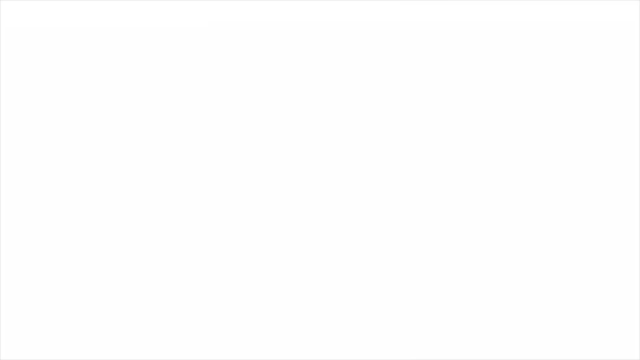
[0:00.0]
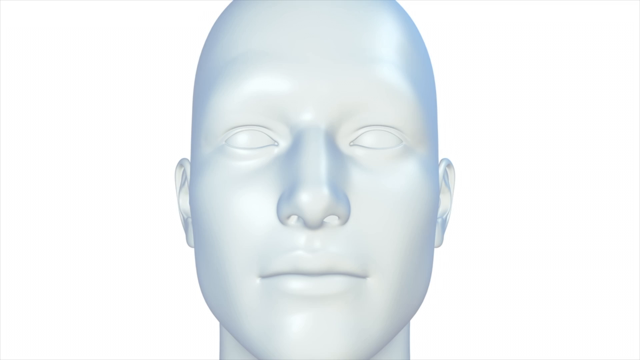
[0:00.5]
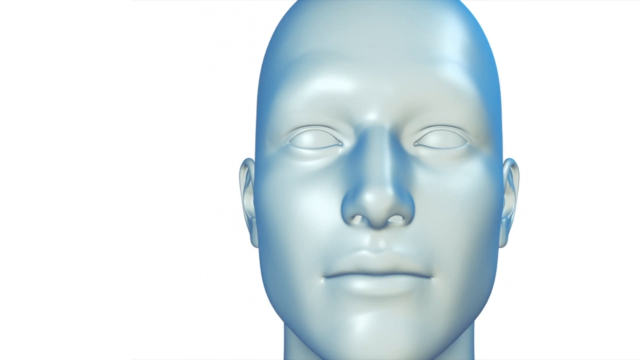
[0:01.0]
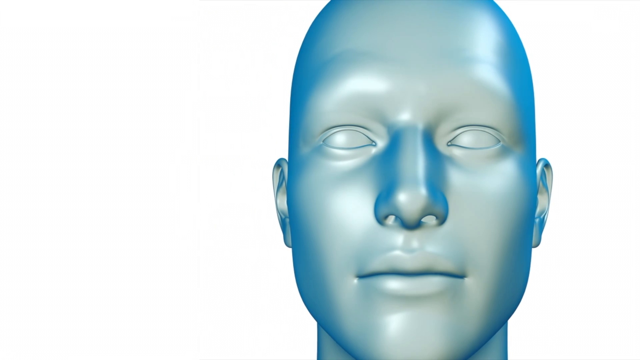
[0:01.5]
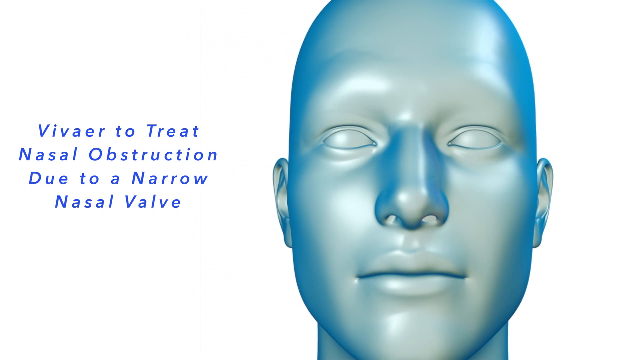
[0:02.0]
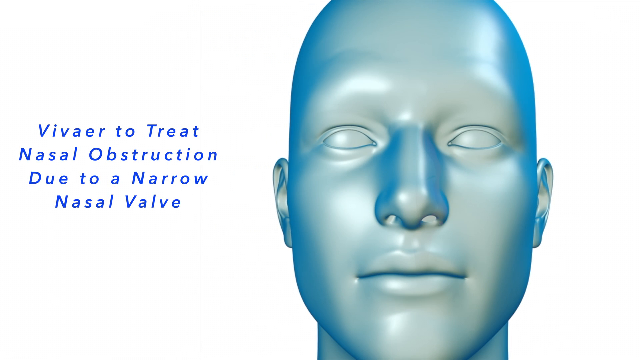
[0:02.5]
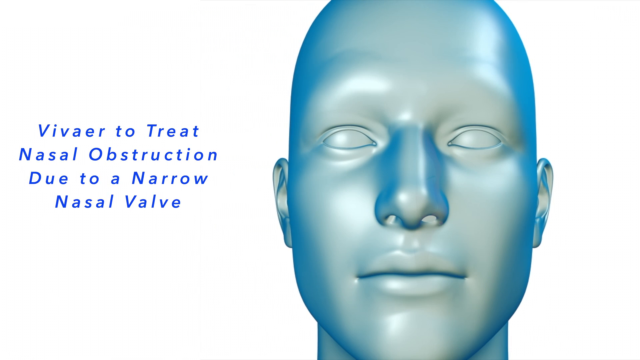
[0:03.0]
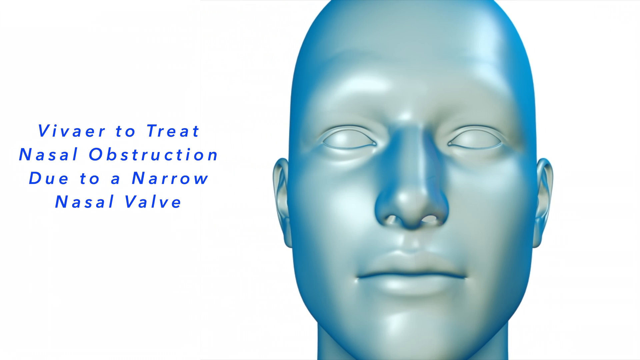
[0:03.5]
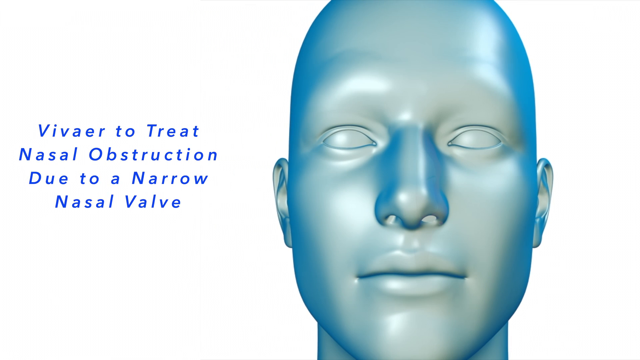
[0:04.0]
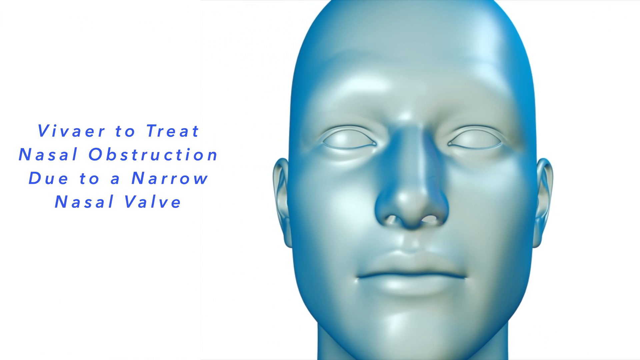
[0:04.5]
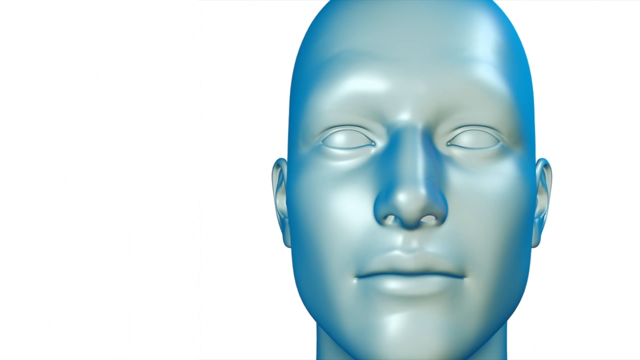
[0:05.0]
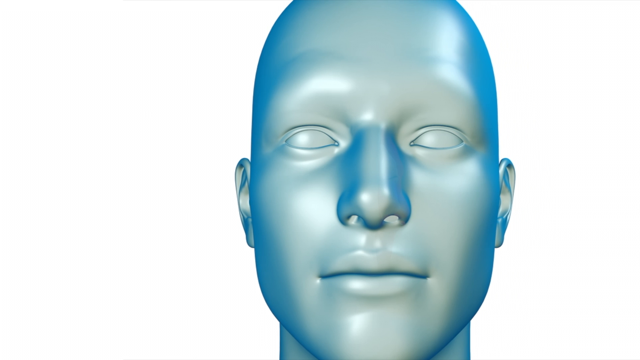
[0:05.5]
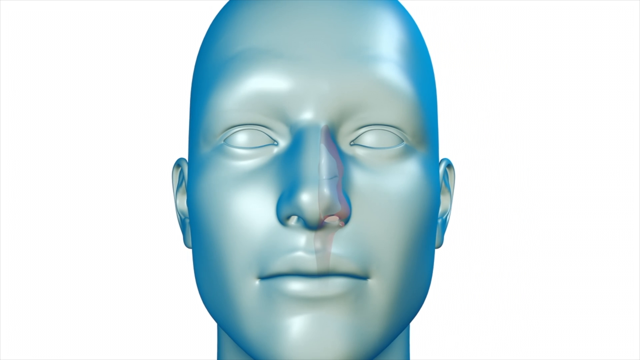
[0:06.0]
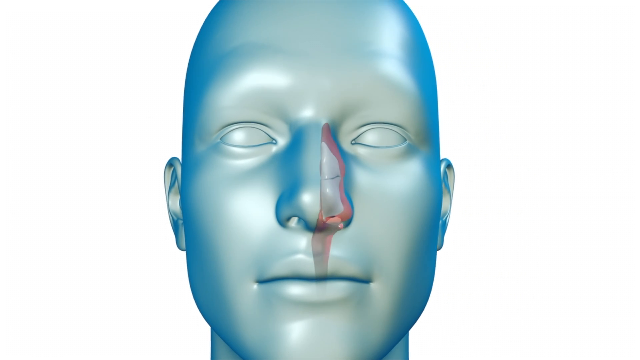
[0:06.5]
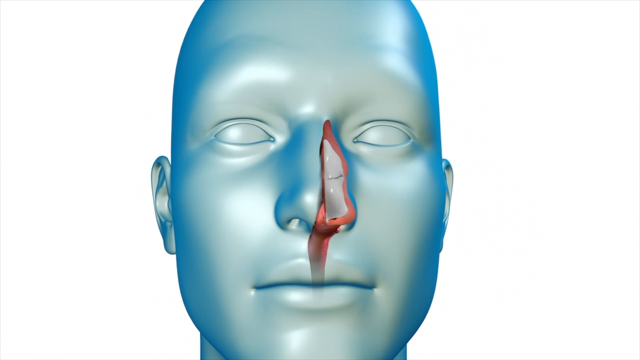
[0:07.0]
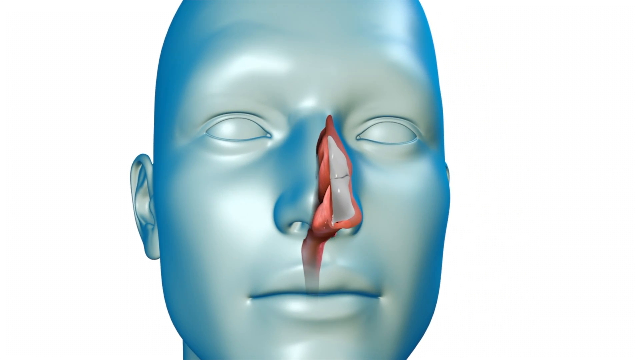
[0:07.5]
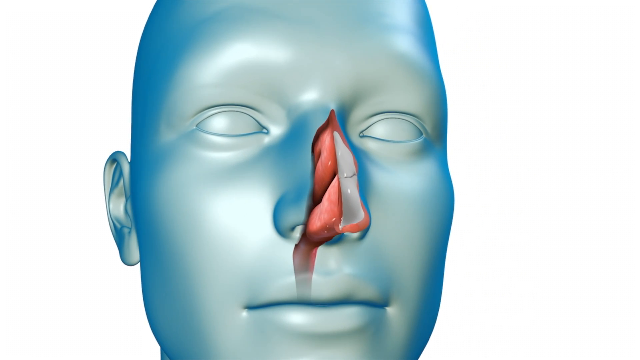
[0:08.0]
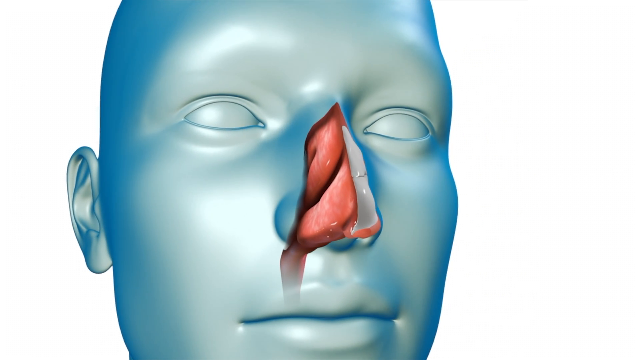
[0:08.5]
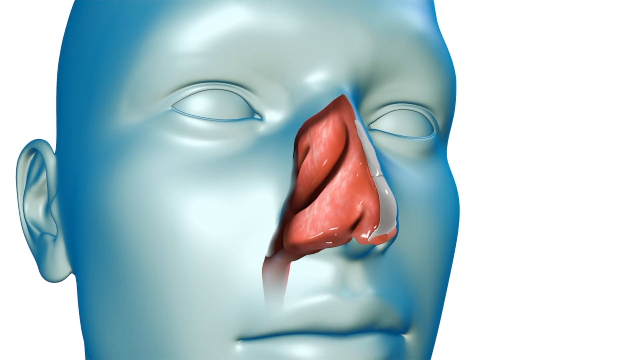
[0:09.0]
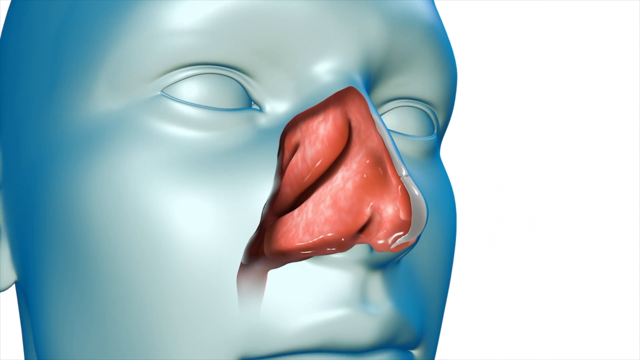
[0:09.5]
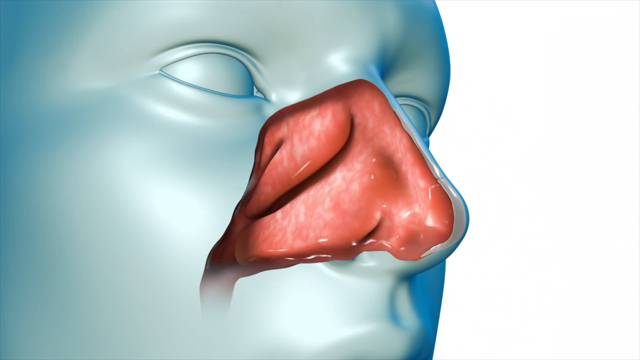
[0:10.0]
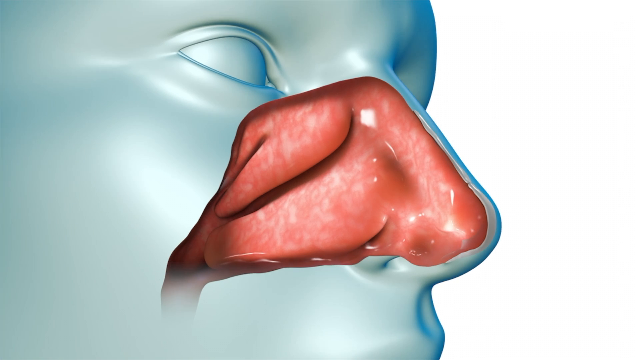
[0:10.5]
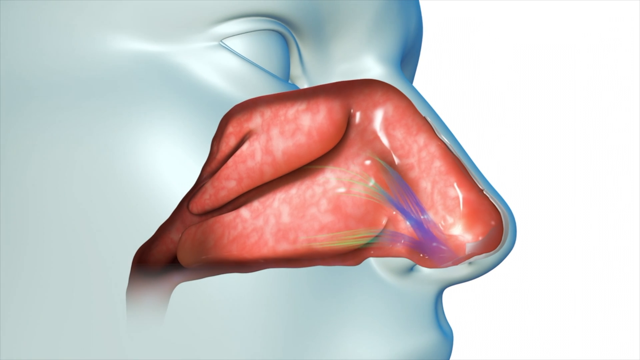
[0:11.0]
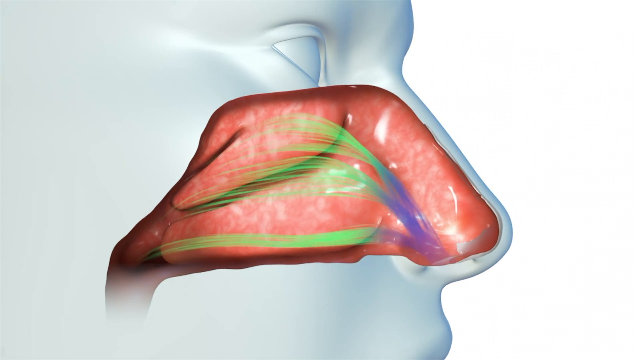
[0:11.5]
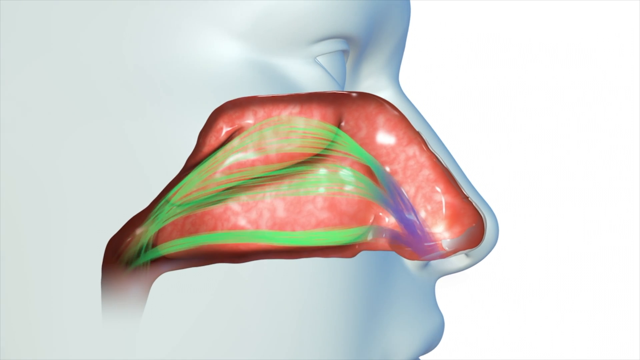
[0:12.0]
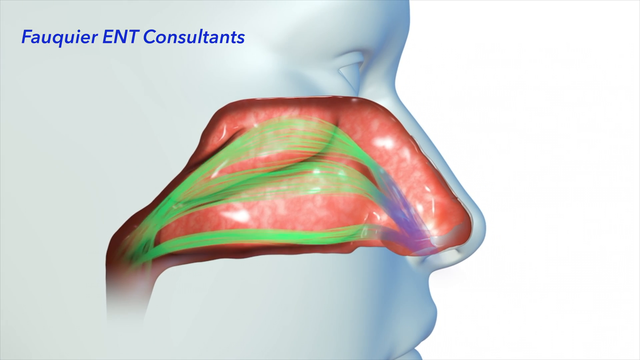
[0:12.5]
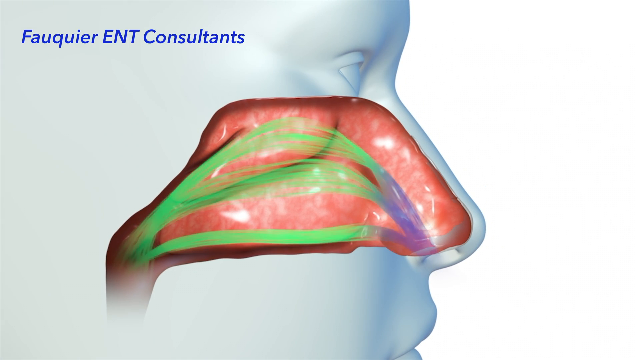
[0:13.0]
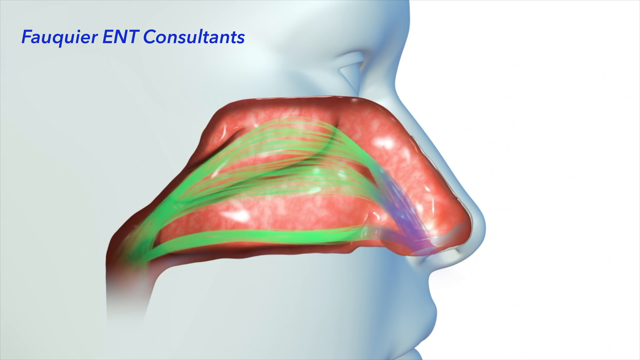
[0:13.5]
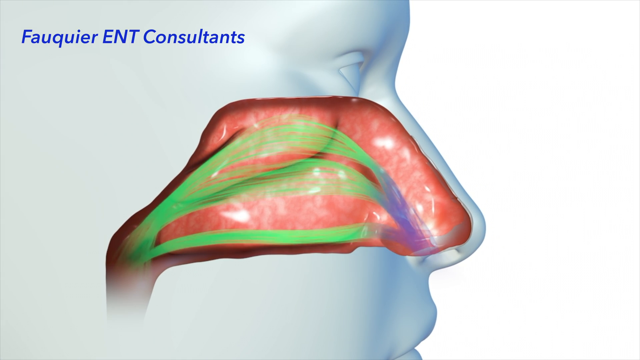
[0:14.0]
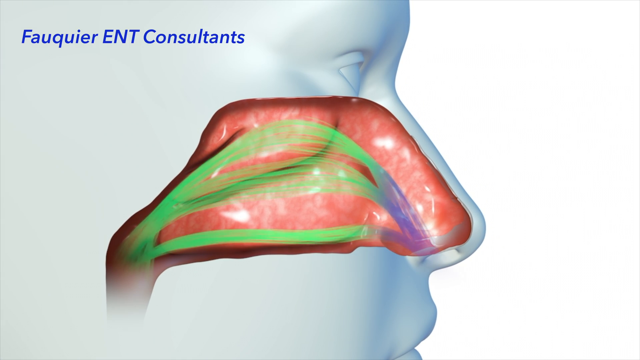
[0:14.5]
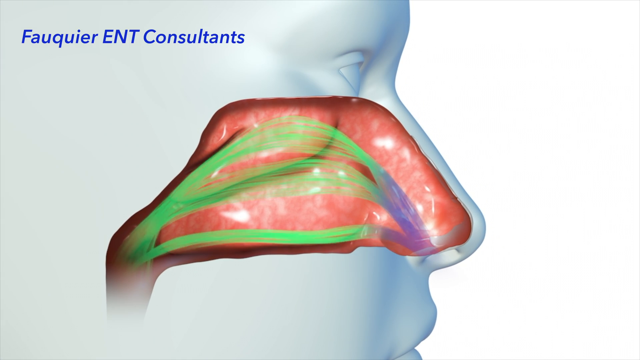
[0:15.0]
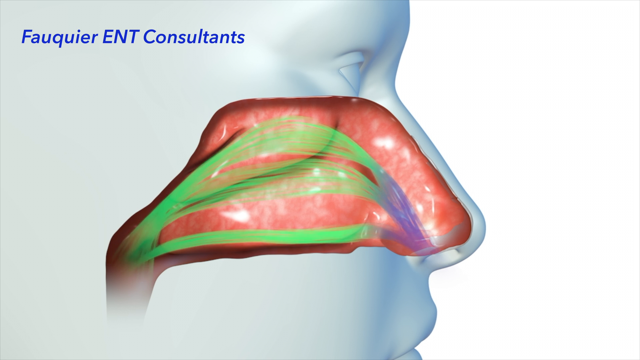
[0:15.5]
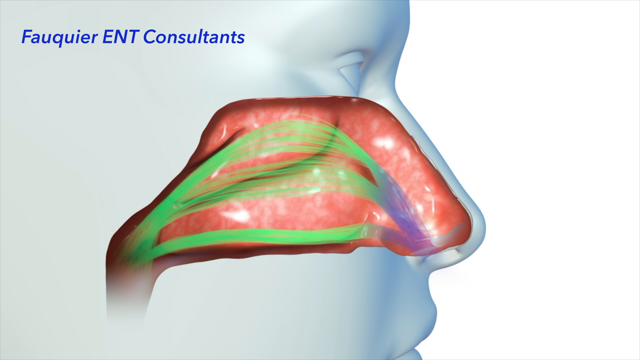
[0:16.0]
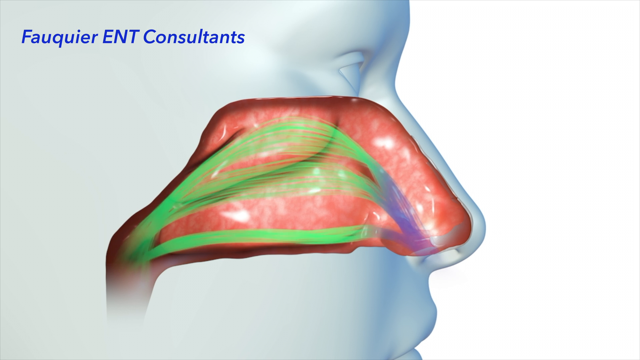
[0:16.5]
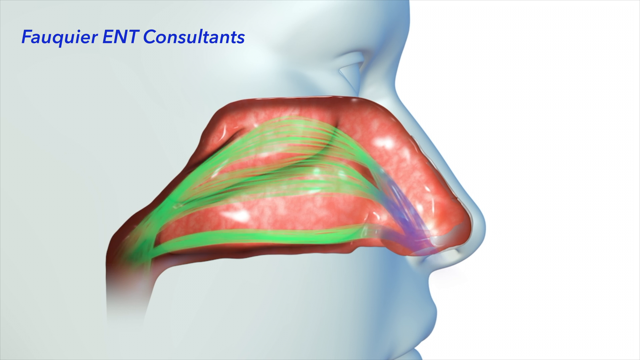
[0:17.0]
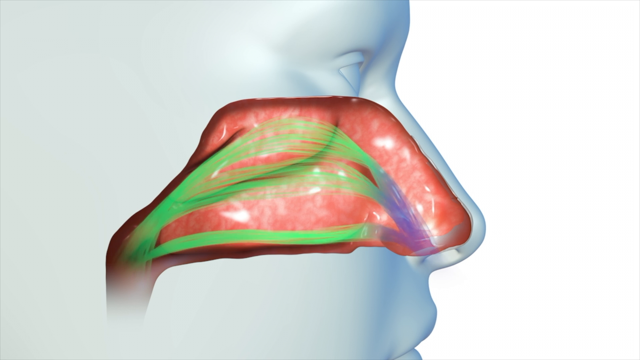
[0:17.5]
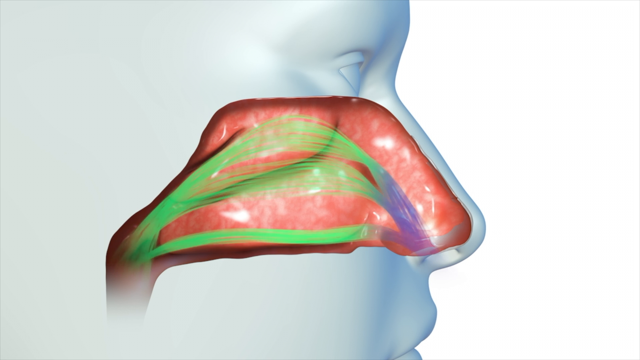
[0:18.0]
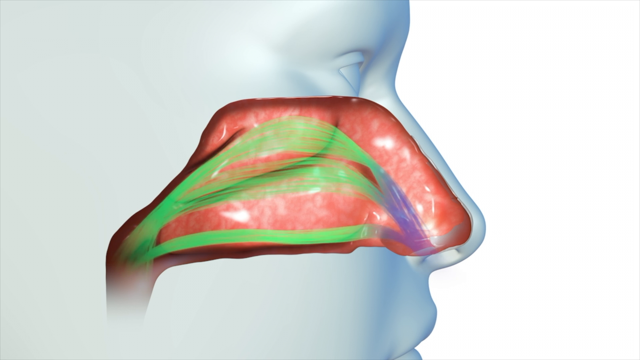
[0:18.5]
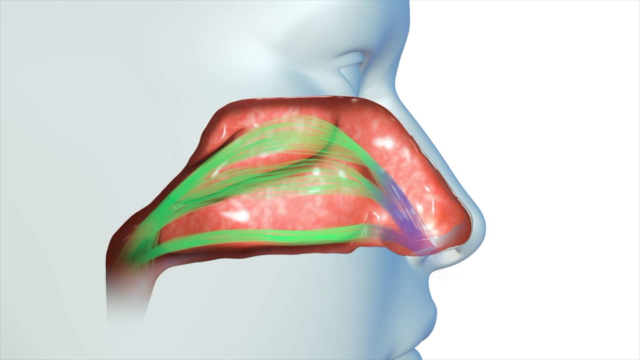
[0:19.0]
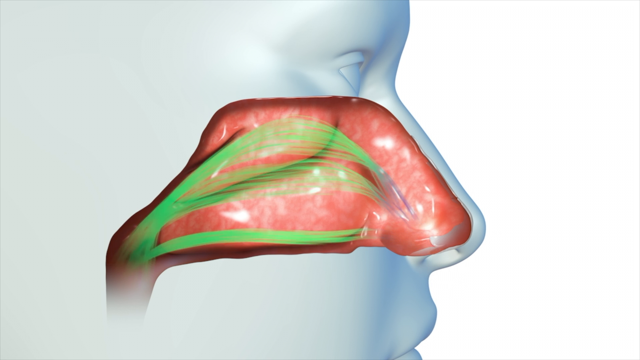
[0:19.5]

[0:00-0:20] A textureless, somewhat translucent blue 3D model of a human face appears on a white background, viewed directly from the front. The face solidifies slightly and moves over to the right side of the frame while blue text appears on the left reading "Vivaer to treat nasal obstruction due to a narrow nasal valve." The text slides off screen to the left and the face returns to the center. The camera begins rotating left around the face and zooms in on the nose, revealing a red model of the nasal passages inside the nose, extending toward the left side of the head. The camera rotates until it reaches the side of the face, and blue and green lines start appearing inside the red area. Text appears at the top left reading "Fauquier ENT Consultants." The lines continue to animate, appearing to trace from the entrance of the nose to the far left side of the red section.